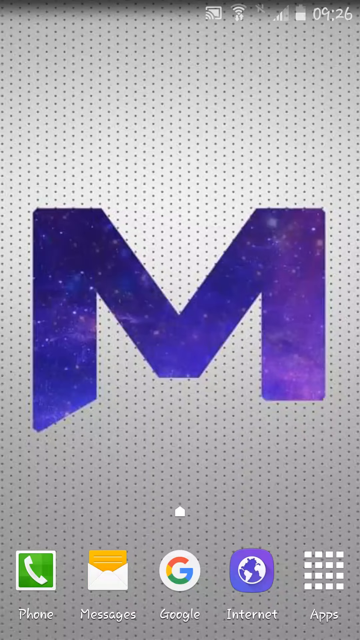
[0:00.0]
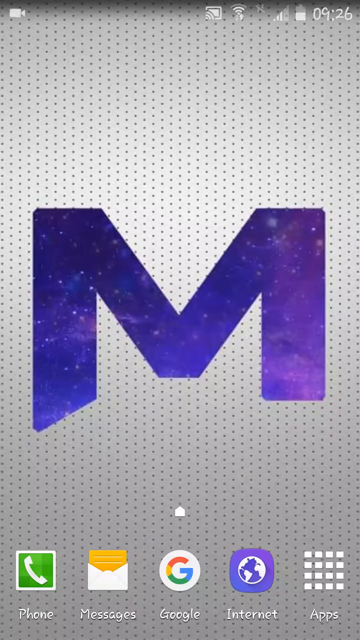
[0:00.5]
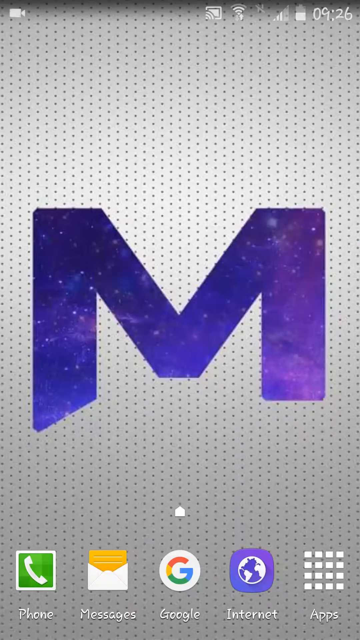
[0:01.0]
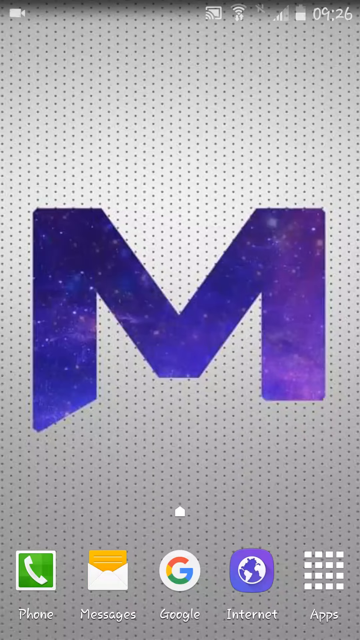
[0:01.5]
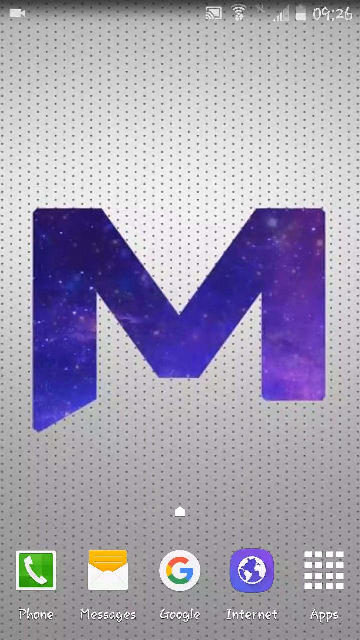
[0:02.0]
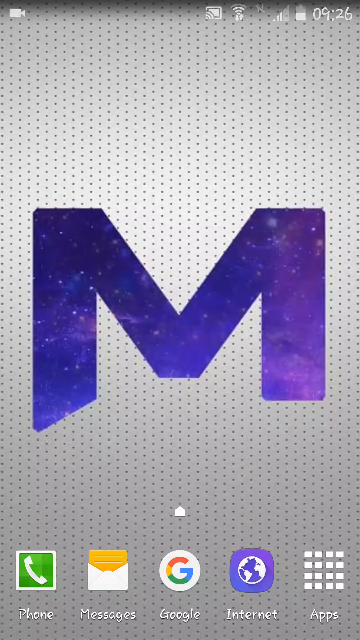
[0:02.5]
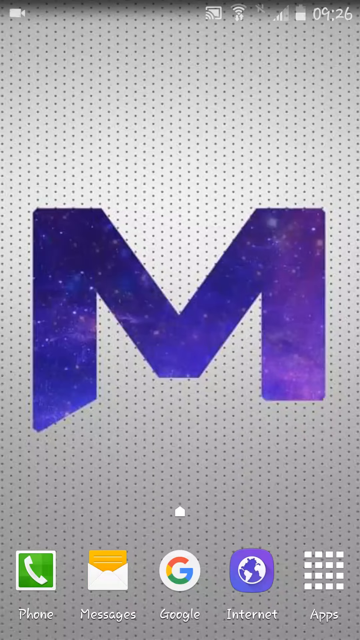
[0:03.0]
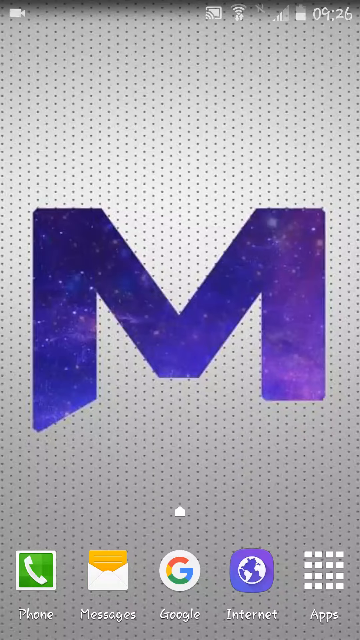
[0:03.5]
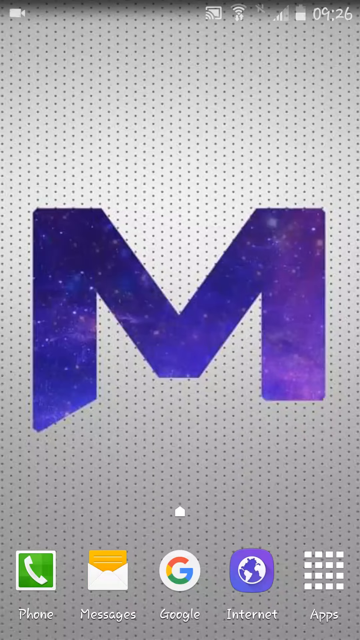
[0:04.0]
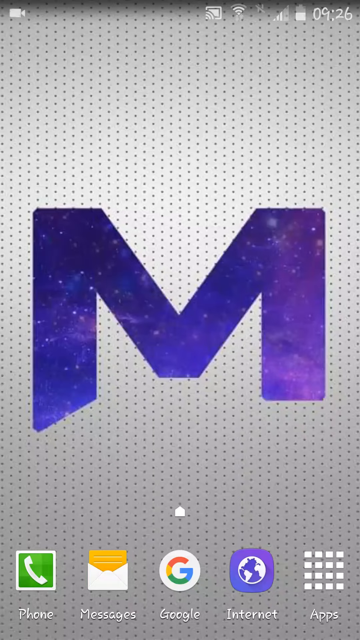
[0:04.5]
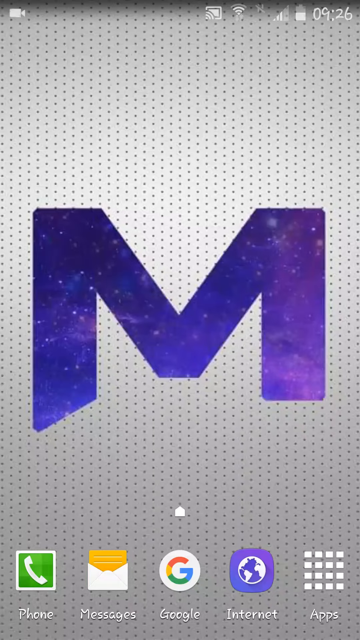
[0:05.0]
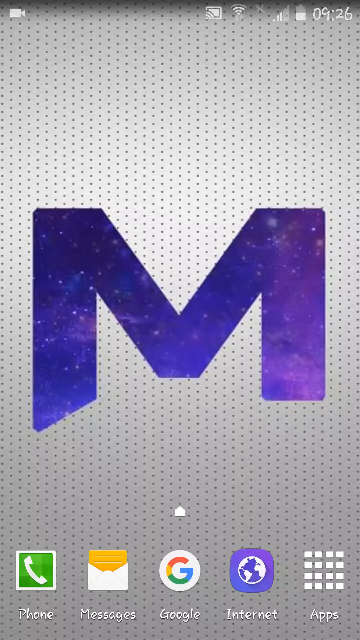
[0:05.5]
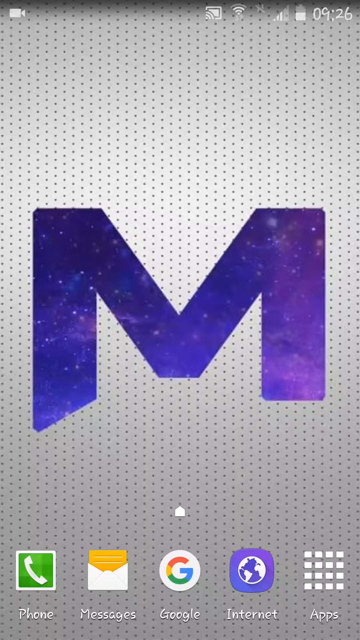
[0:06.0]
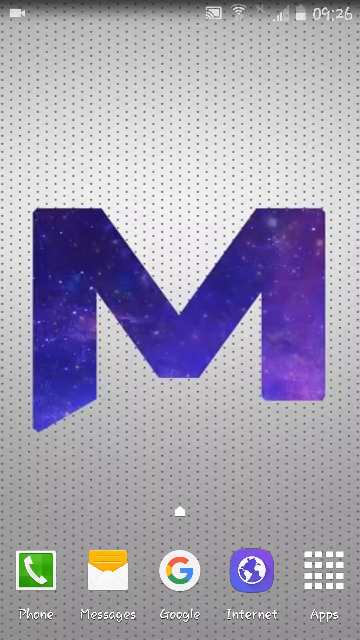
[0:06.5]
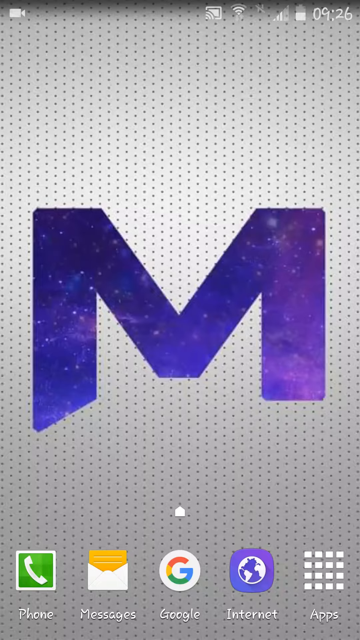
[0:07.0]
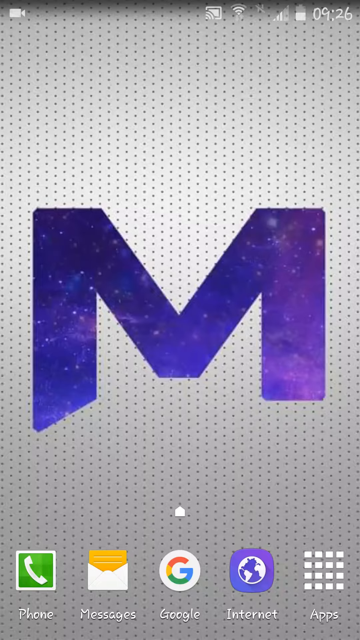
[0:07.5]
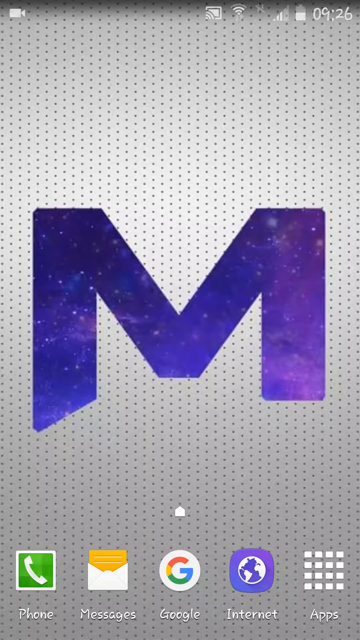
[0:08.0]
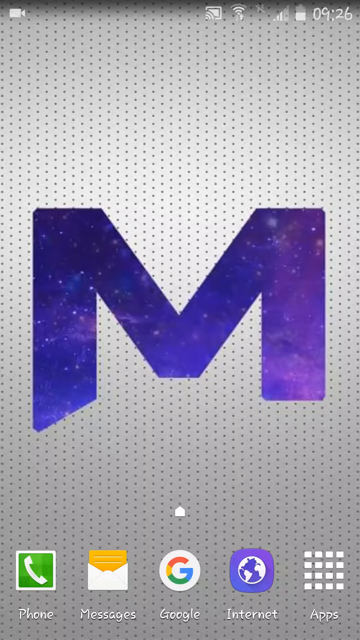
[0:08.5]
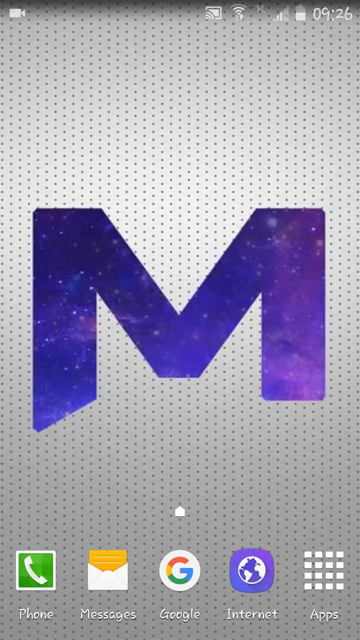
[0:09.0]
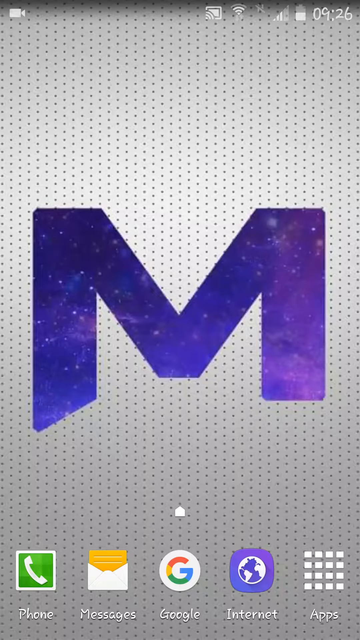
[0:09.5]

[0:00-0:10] The video begins on a gray screen with many darker gray dots scattered all over it in columns, and a letter M in the middle that looks like the night sky. At the bottom are some application icons: a phone on the left, a letter to its right, a Google Chrome startup button to the right of that, then an internet startup button, and a grid on the right side. It all looks like it is on a cell phone. At the very top, the time 9:26 is in the upper right corner, along with a battery status bar and a signal status bar, and there is an antenna on the left side.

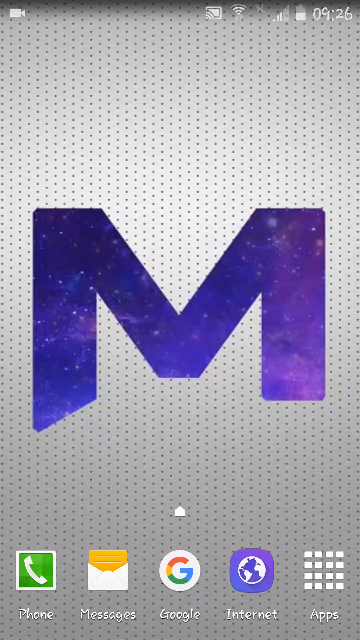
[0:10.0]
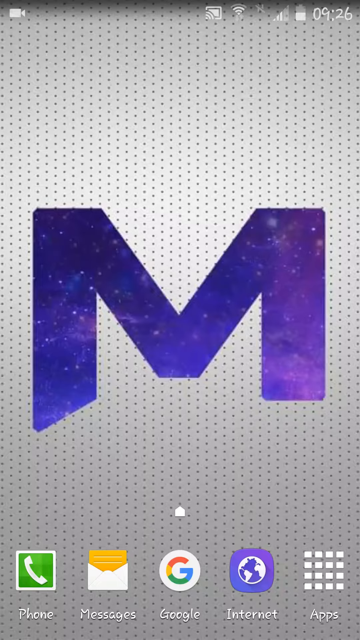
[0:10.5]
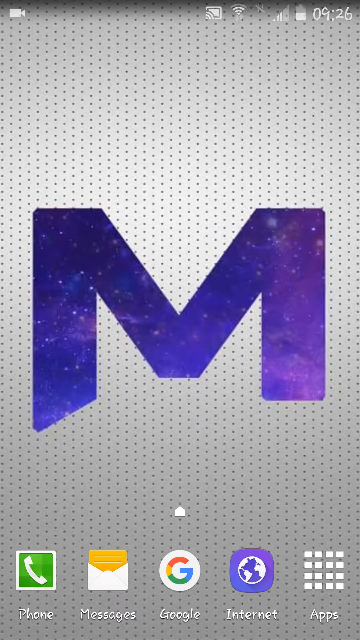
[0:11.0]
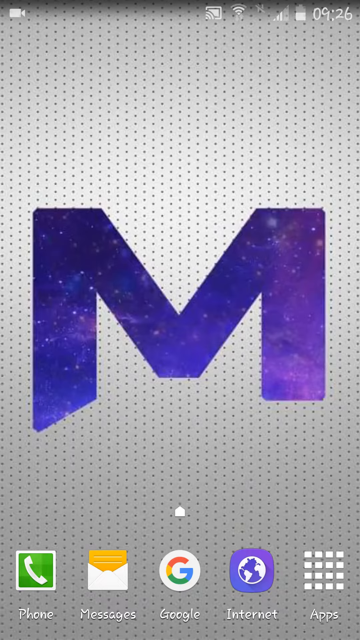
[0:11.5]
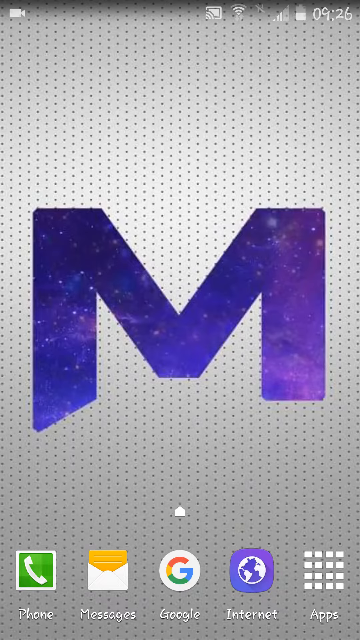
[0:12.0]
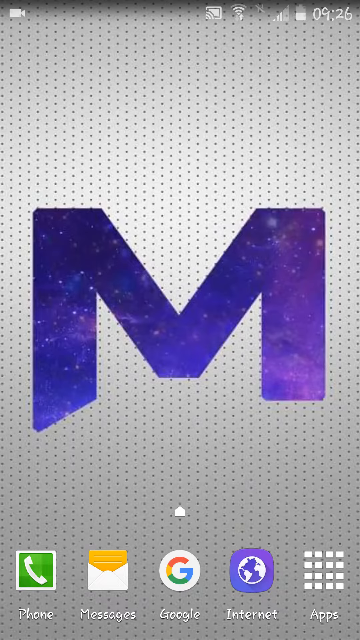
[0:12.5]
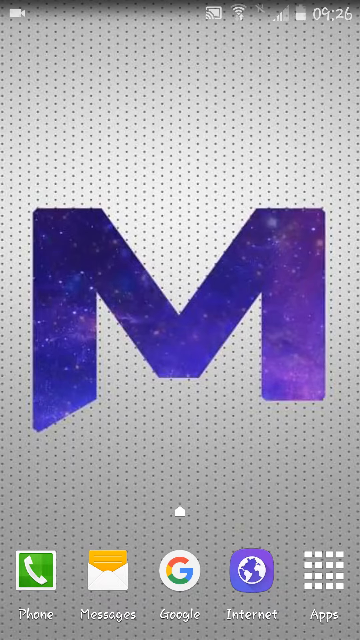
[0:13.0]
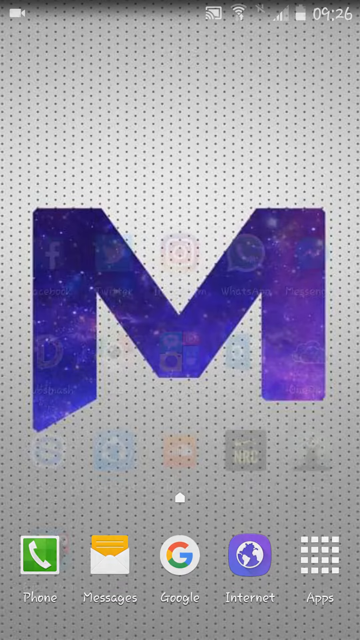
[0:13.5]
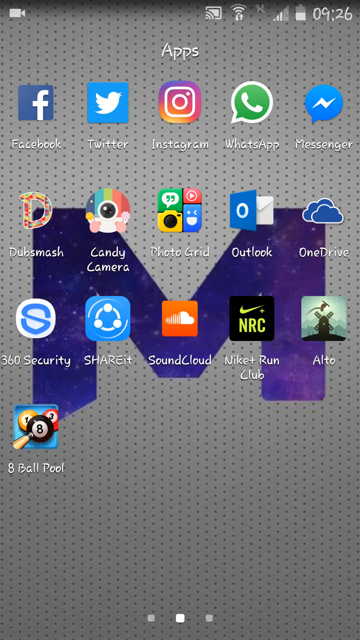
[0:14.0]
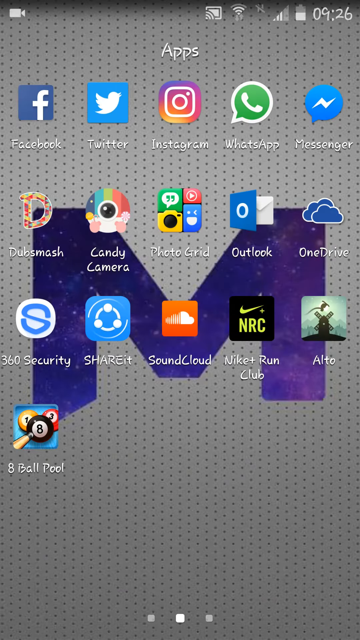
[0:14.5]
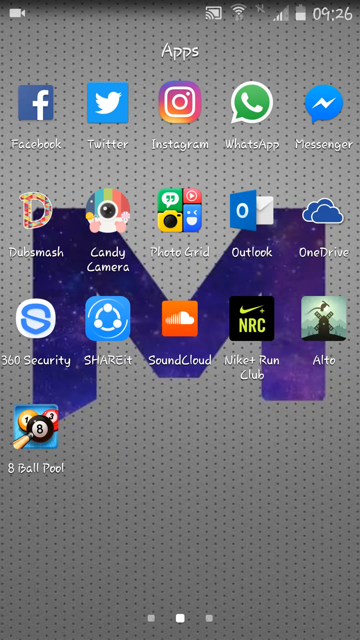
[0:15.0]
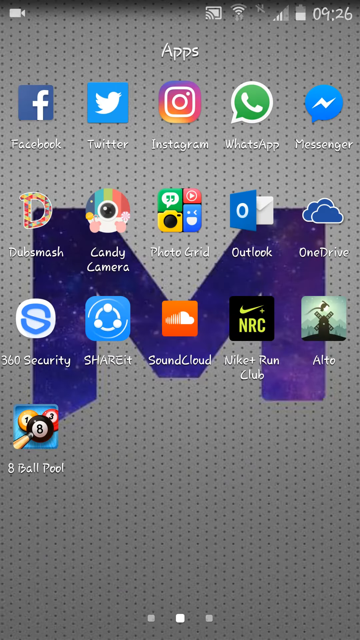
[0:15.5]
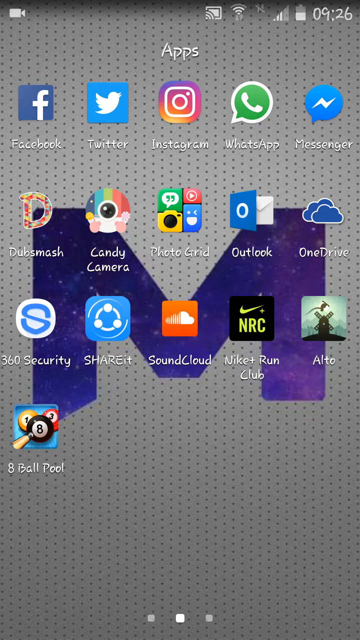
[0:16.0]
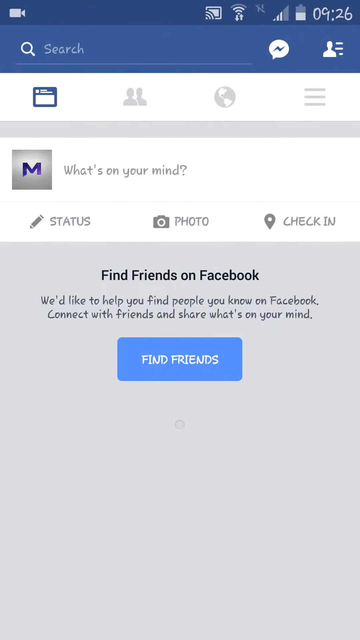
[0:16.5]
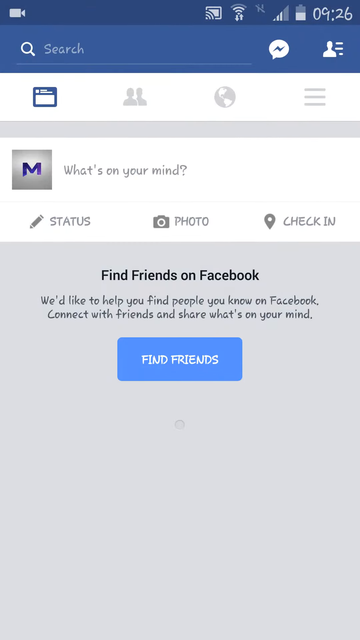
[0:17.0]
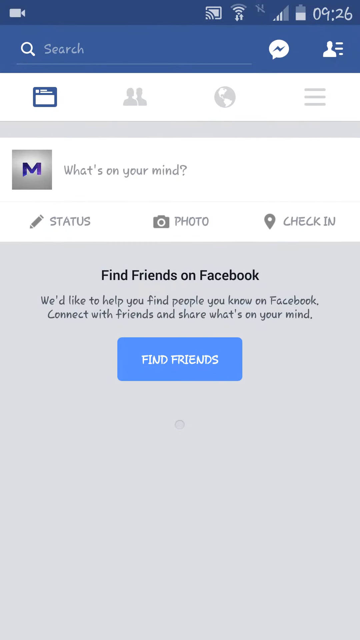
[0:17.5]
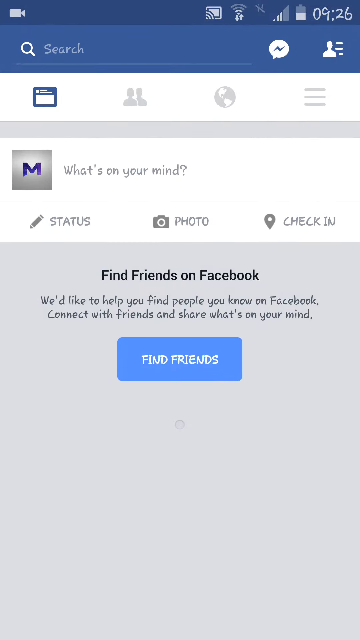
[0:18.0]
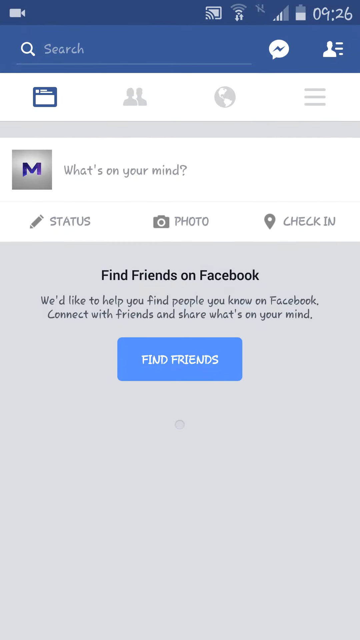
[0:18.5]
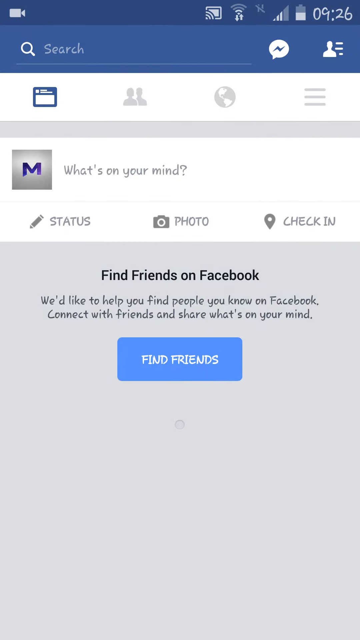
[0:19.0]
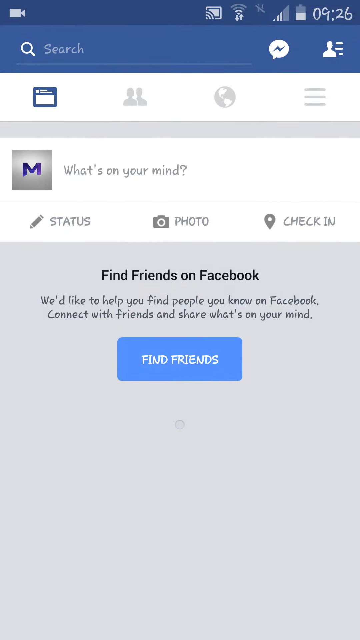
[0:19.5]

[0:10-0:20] A giant letter M made out of stars from the night sky is in the middle of the screen, with dark gray dots over a light gray background. At the bottom are icons: a phone, an envelope, a Google Chrome button, an internet button, and a grid on the right side. At the top are the time 9:26, a battery status icon, a cell phone signal bar and a Wi-Fi signal bar, and in the upper left corner there is some kind of camera. This is a cell phone home screen. It stays on that screen, and then suddenly a set of icons appears, showing the apps on the phone: Facebook, Twitter, Instagram, Whatsapp, Messenger, Dubsmash, Candy Camera, Photogrid, Outlook, OneDrive, 360 Security, Share, SoundCloud, AITO, 8 Ball Pool and Nike RunClub. The screen then switches to what appears to be the inside of Facebook, with some Facebook icons. At the bottom it says "find friends on Facebook" with a "find friends" button, and at the top it says "what's on your mind", with a place to write a status.